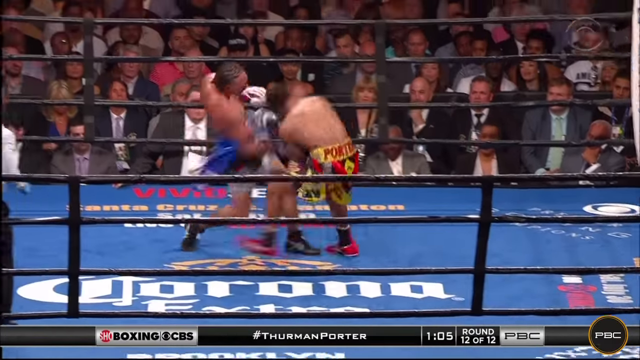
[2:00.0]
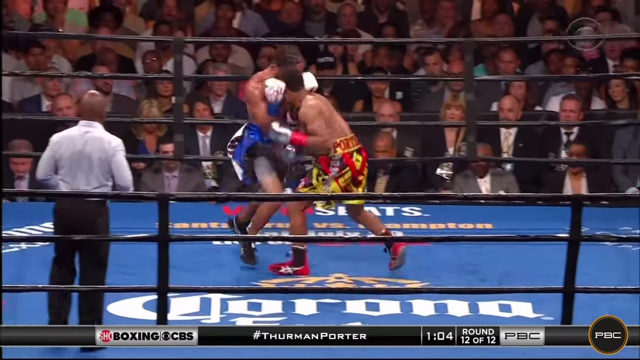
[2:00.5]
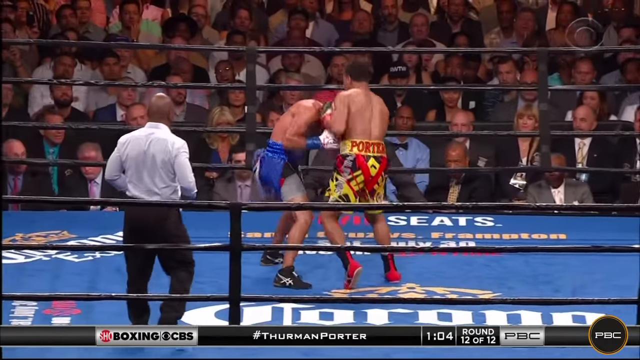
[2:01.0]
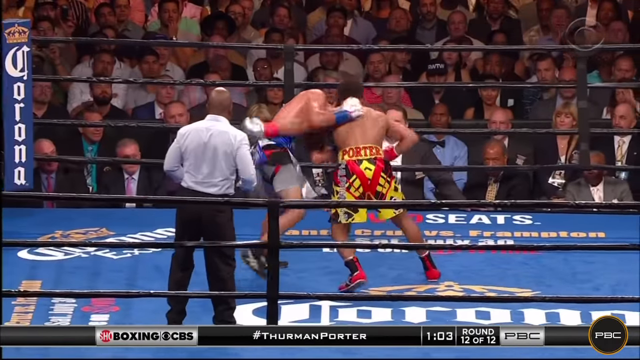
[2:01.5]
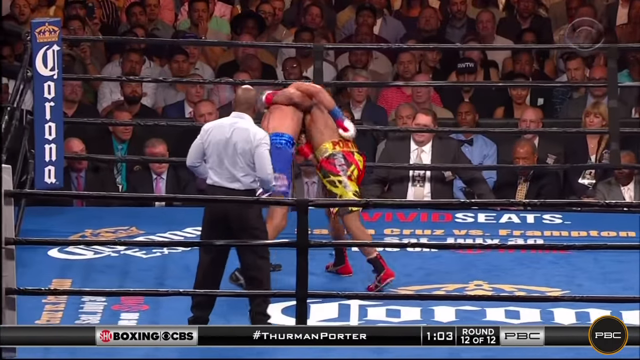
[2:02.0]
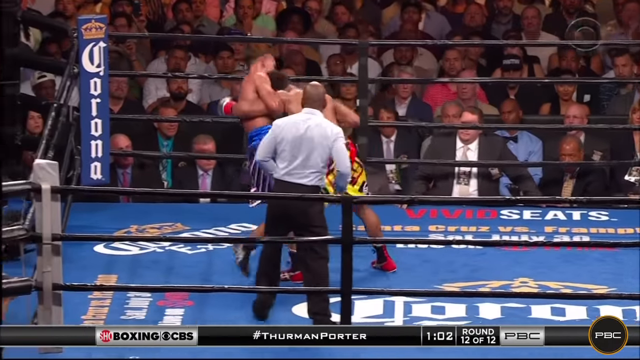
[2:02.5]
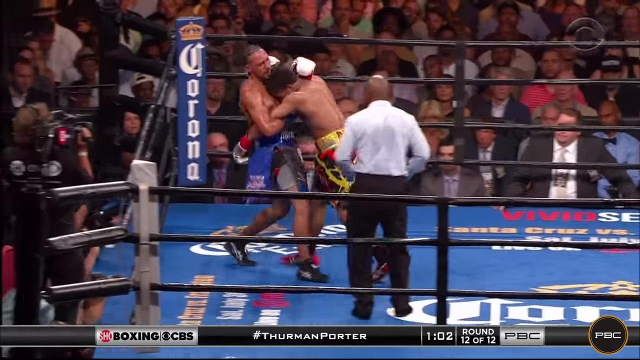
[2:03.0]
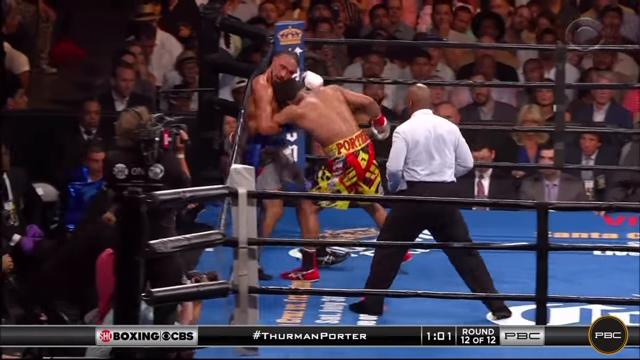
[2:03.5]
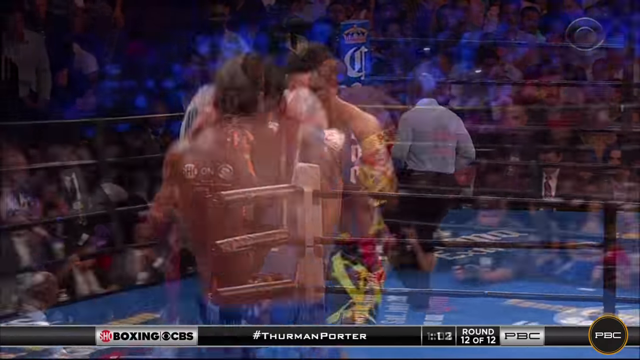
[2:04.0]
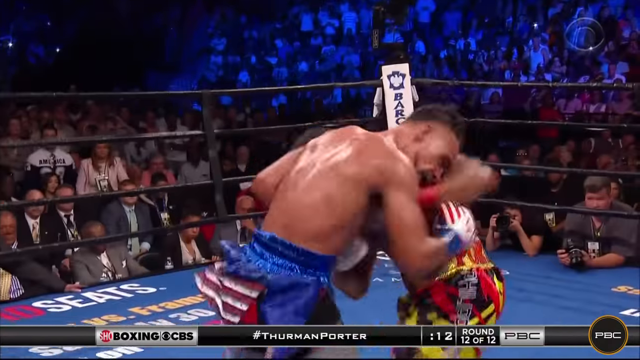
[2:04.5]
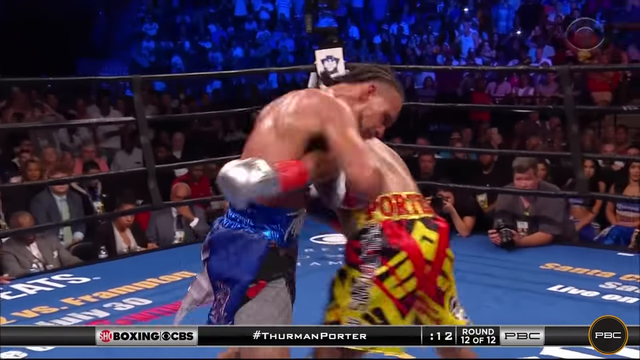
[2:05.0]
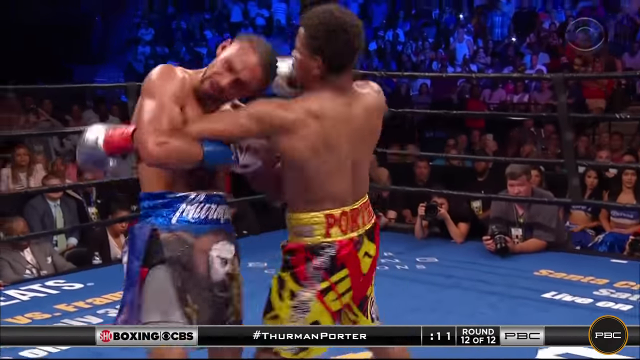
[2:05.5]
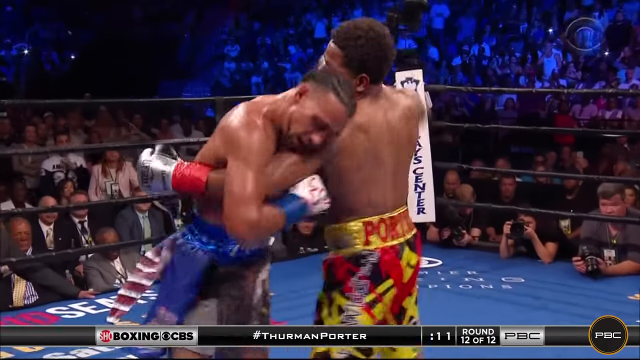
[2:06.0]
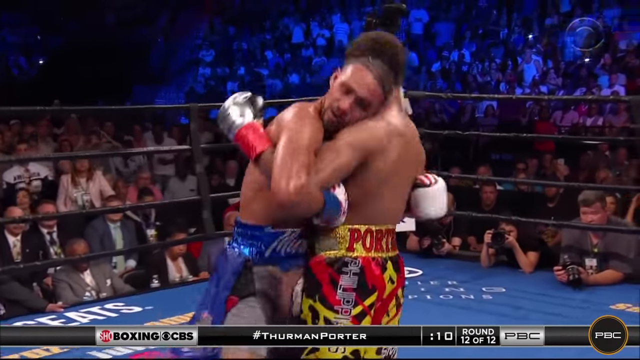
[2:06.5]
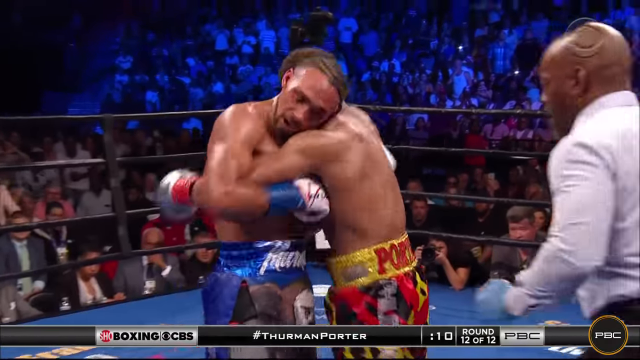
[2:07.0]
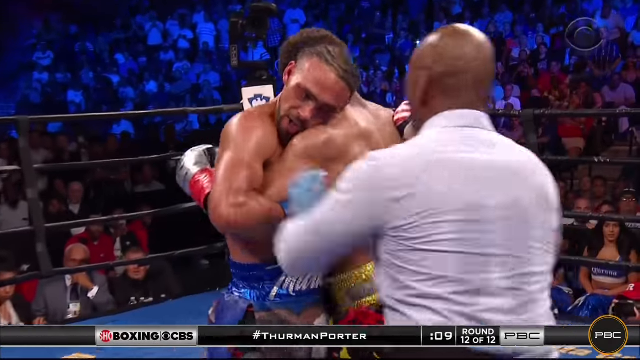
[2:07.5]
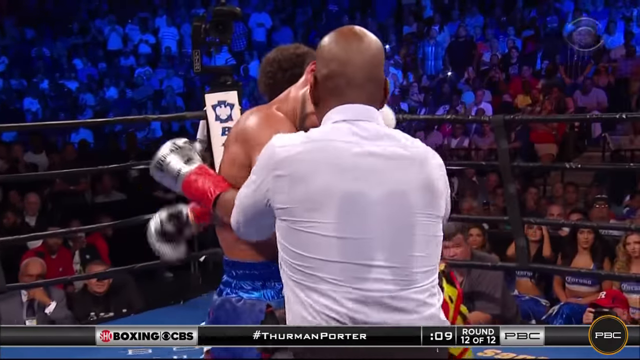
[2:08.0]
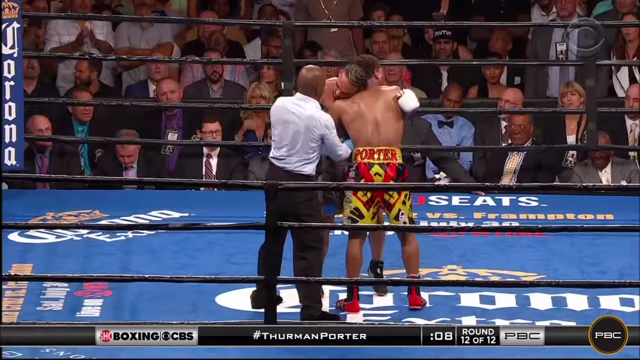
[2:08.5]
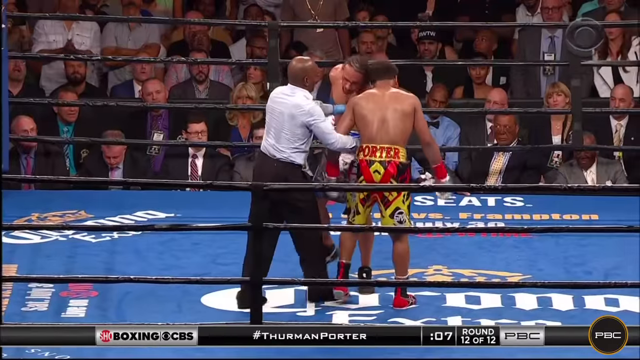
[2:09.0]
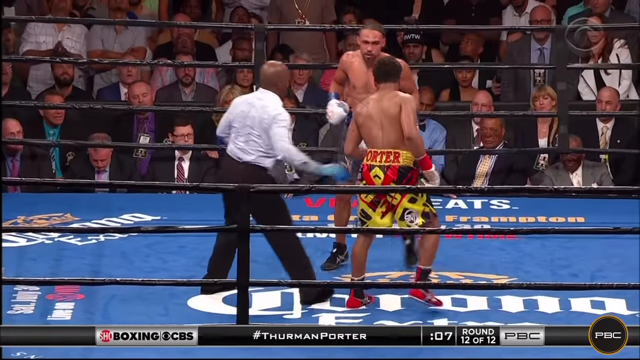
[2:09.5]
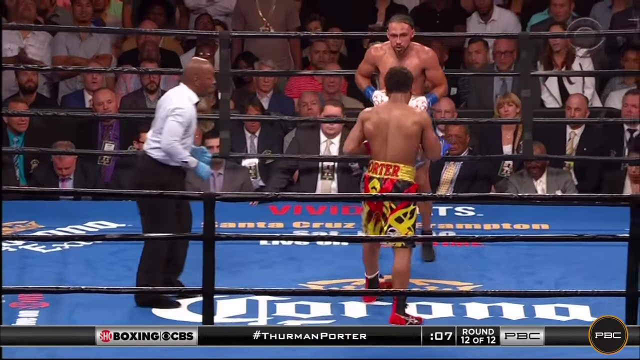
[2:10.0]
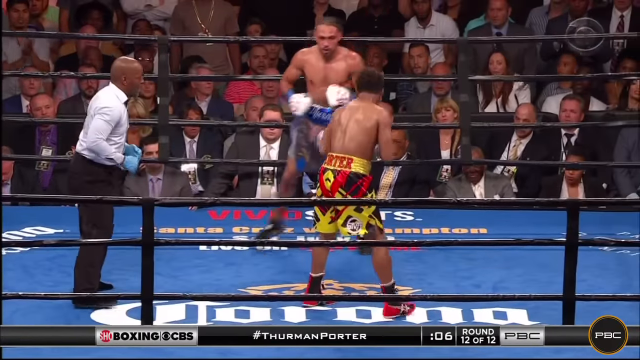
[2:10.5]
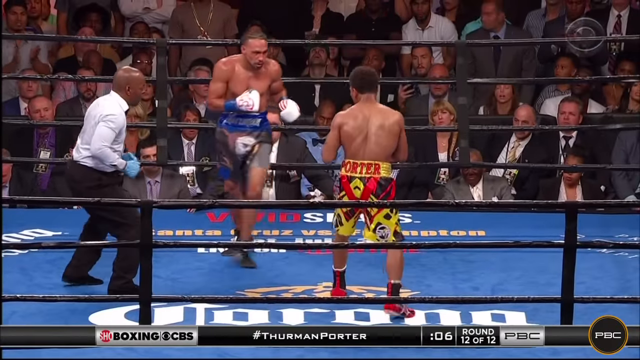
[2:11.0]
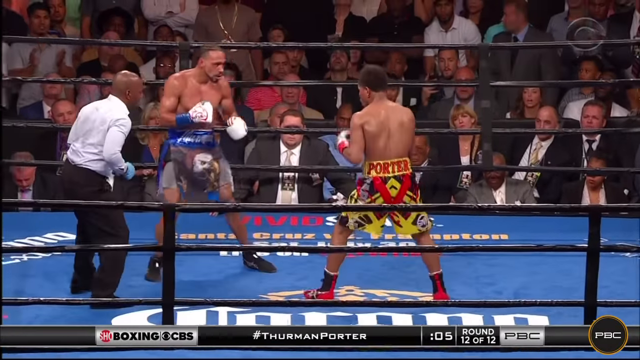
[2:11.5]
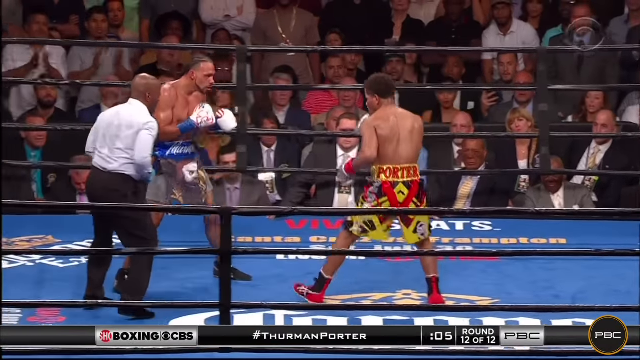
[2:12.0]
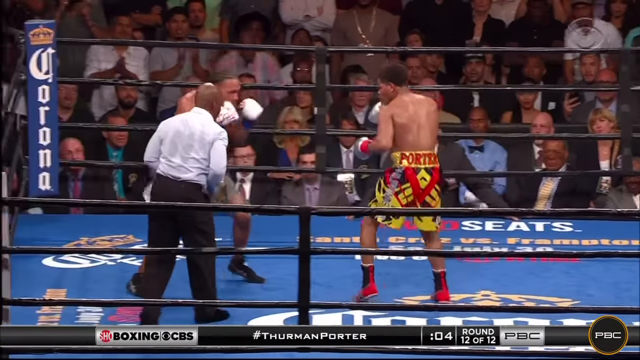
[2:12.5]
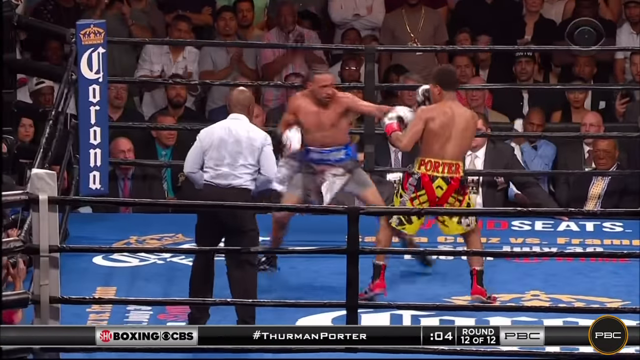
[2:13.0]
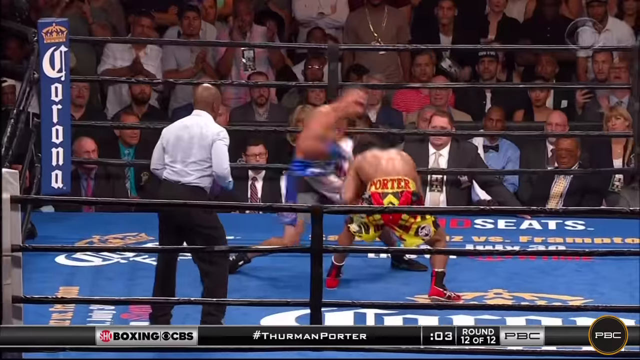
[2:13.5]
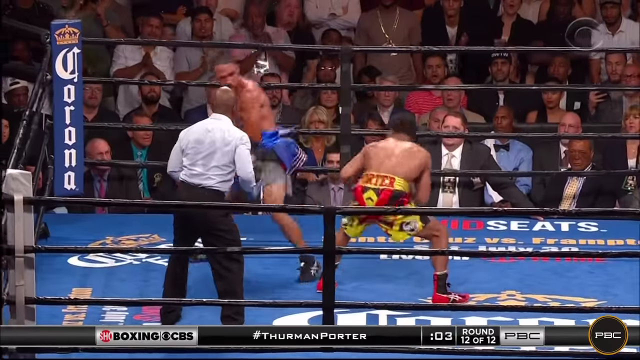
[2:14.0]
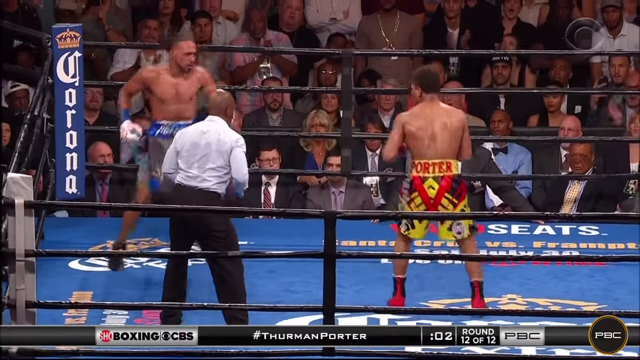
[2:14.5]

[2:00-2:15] Near the middle of the ring, the boxer in yellow and black shorts, Porter, throws punches and pushes the boxer in blue shorts backward while leaned up against him. A cut shows them closer up in the middle of the ring, tangled up and grabbing each other's arms, with the boxer in yellow and black shorts still throwing punches while the boxer in blue shorts appears to cling on to him to mitigate the damage. The referee, bald and in a bright white dress shirt, appears to step in between them and push them apart; he is seen from his back as he comes in. The video then jumps to a farther view of the fighters moving backward away from one another as the final seconds of round 12 of 12 tick away. They face one another with their hands up, ready to hit, but throw no punches, pacing back and forth almost as if getting a feel for each other.